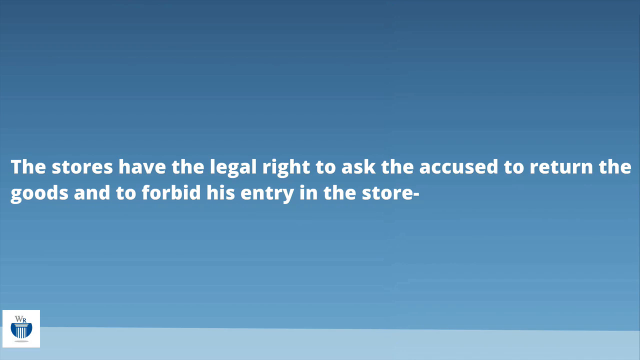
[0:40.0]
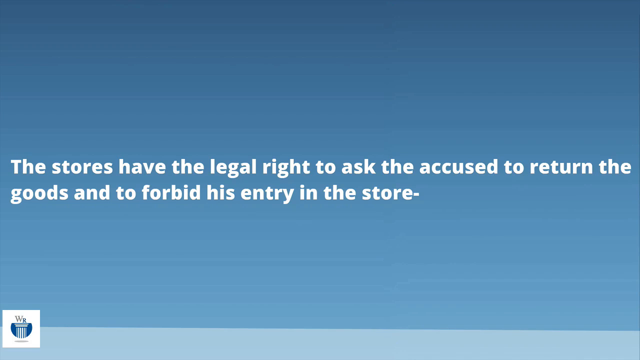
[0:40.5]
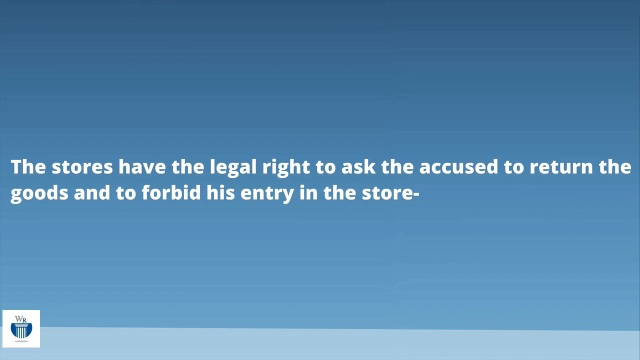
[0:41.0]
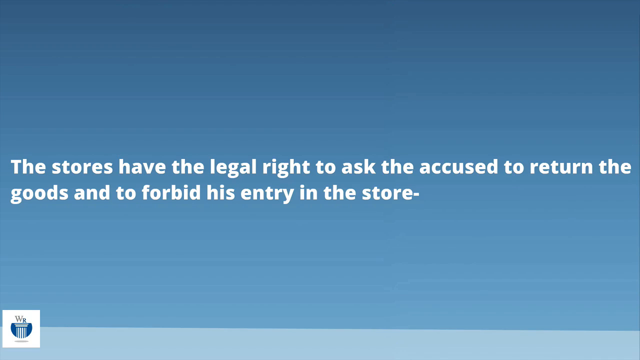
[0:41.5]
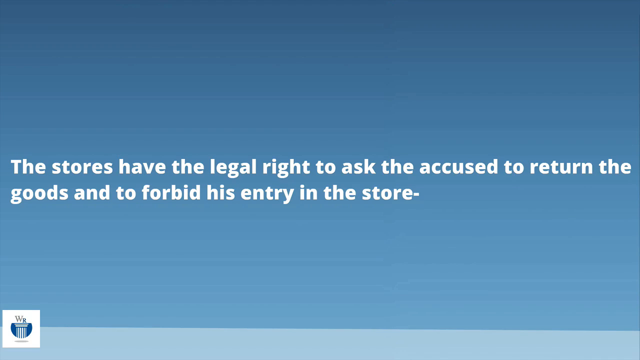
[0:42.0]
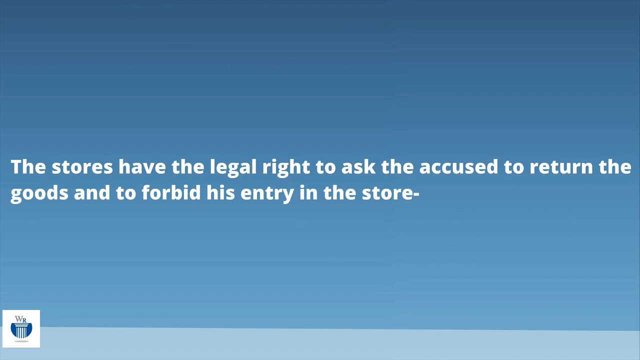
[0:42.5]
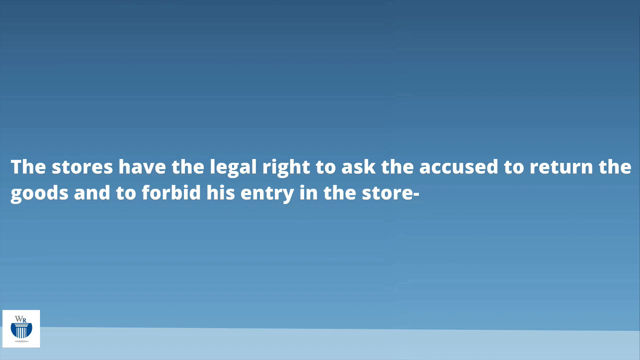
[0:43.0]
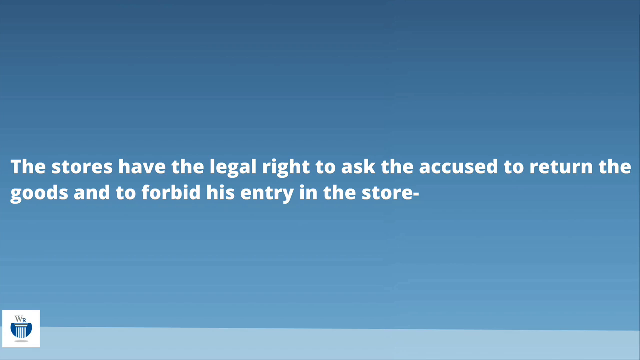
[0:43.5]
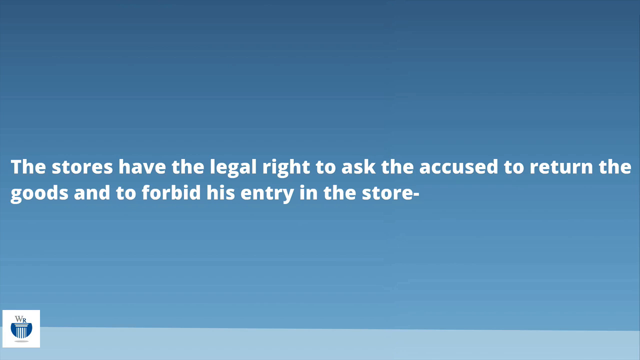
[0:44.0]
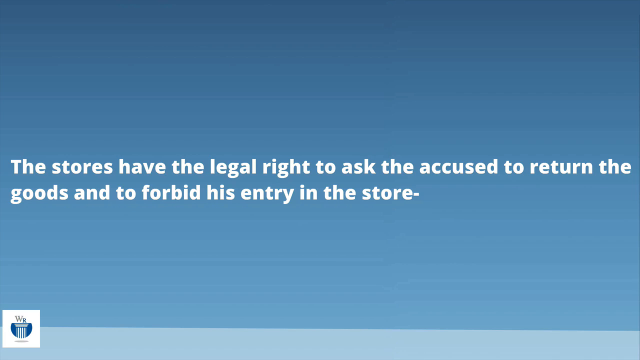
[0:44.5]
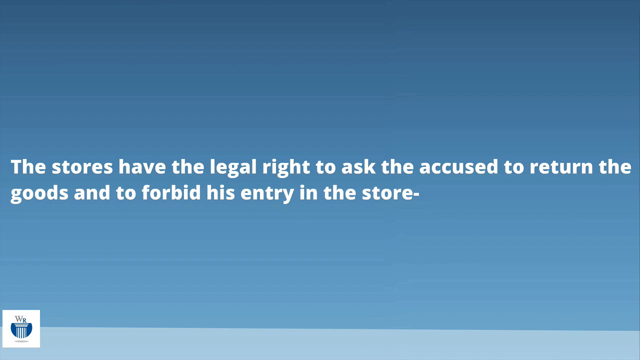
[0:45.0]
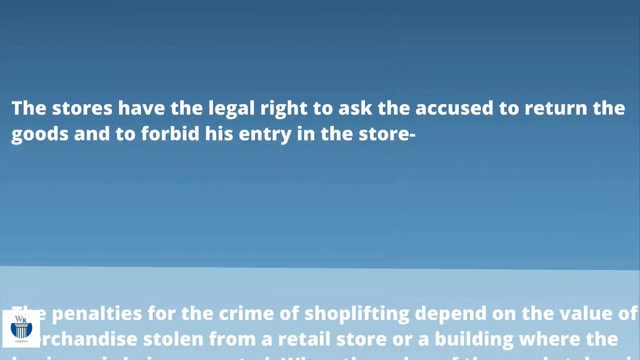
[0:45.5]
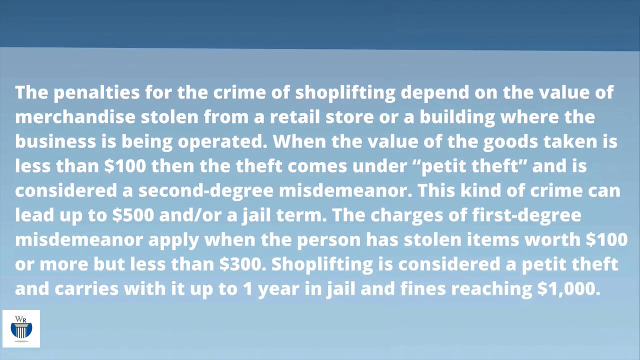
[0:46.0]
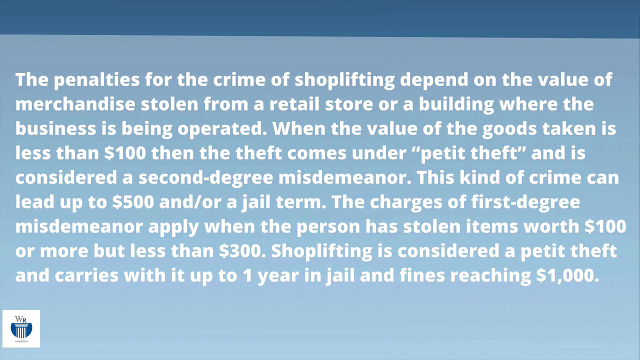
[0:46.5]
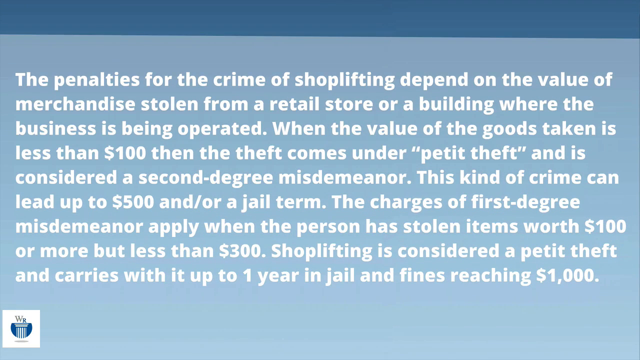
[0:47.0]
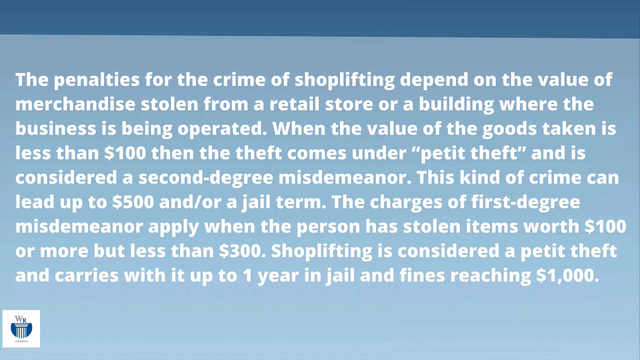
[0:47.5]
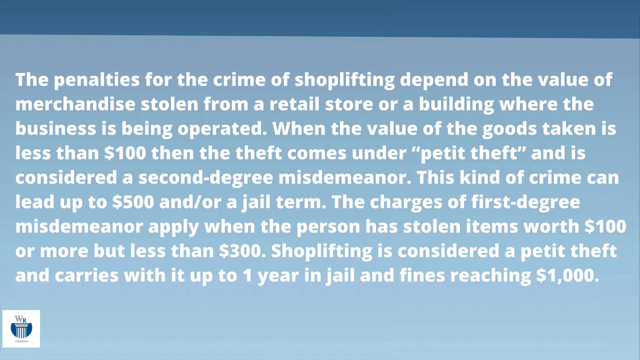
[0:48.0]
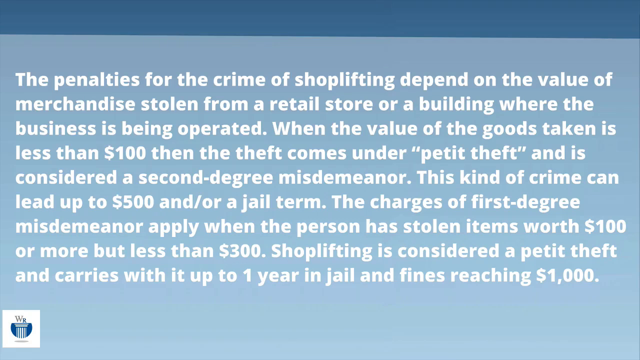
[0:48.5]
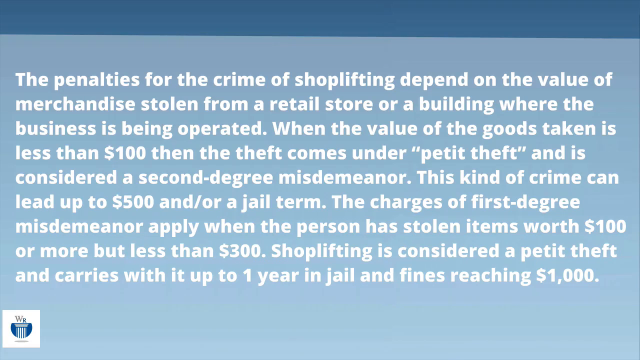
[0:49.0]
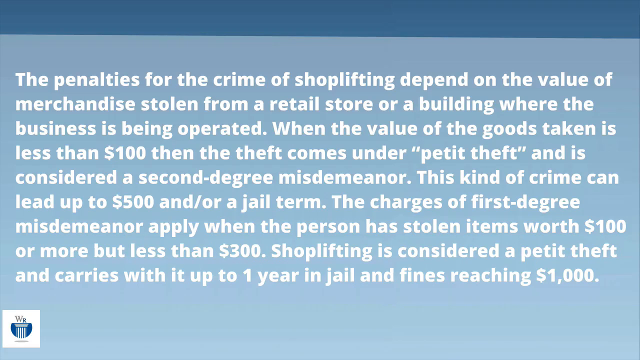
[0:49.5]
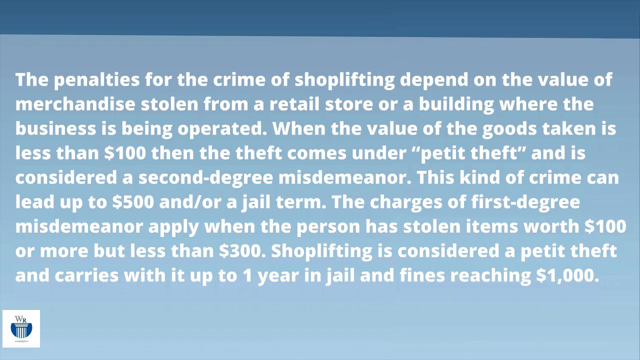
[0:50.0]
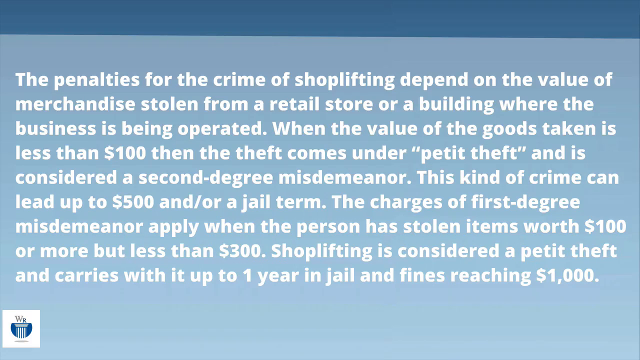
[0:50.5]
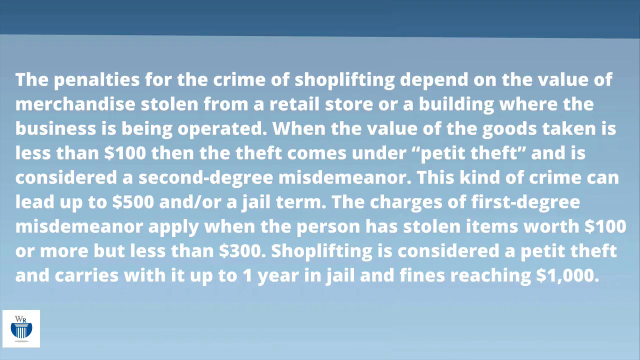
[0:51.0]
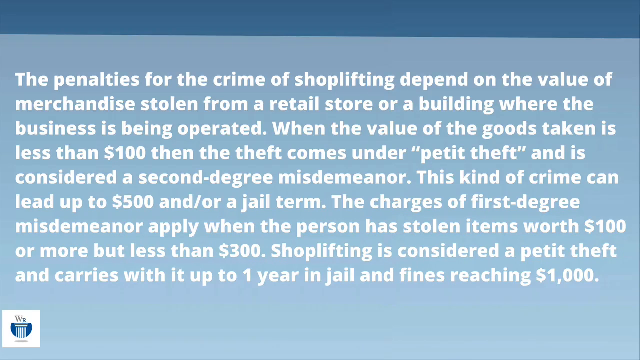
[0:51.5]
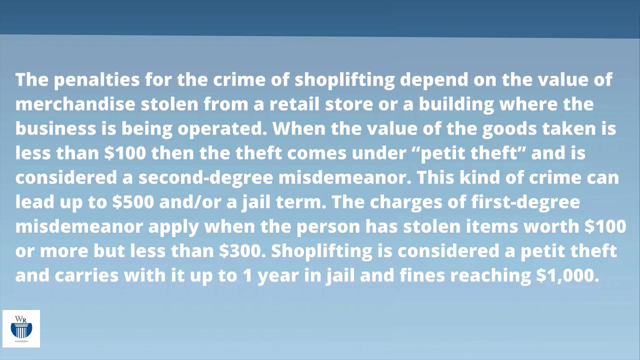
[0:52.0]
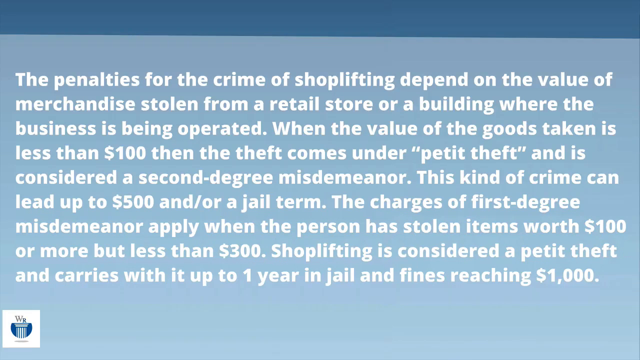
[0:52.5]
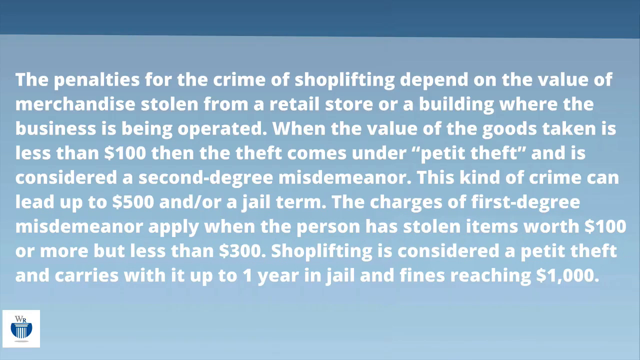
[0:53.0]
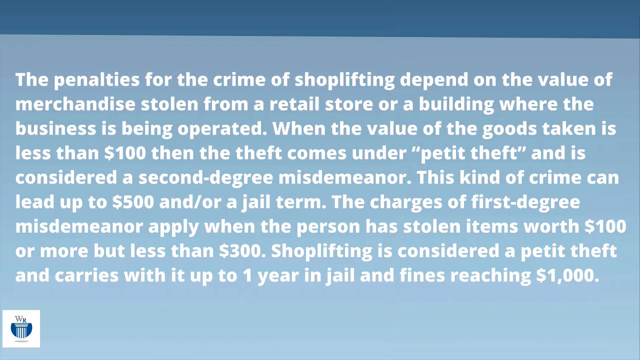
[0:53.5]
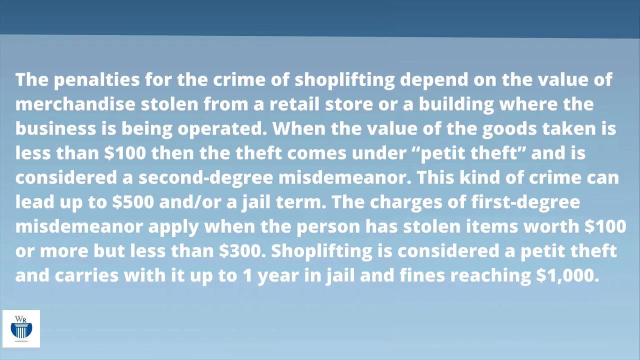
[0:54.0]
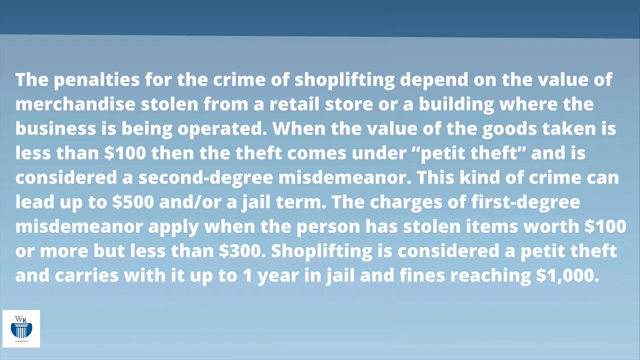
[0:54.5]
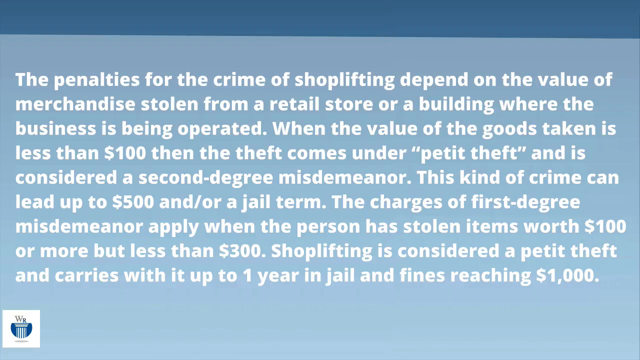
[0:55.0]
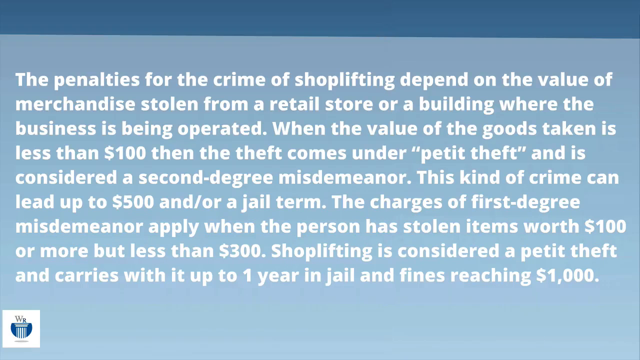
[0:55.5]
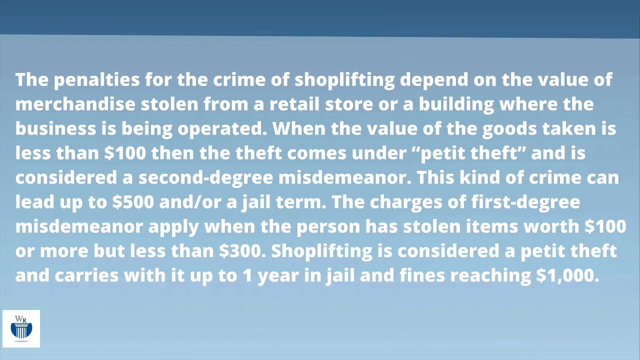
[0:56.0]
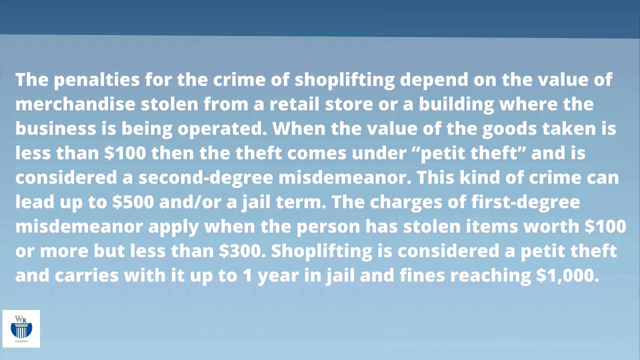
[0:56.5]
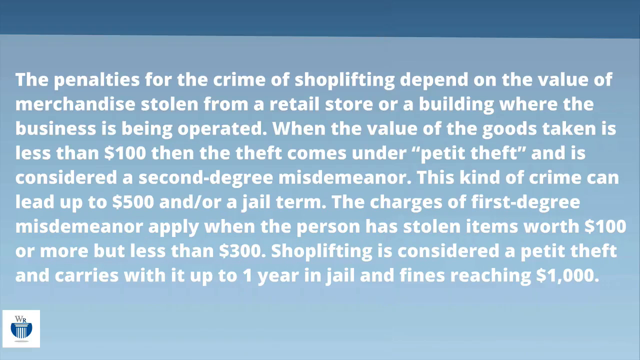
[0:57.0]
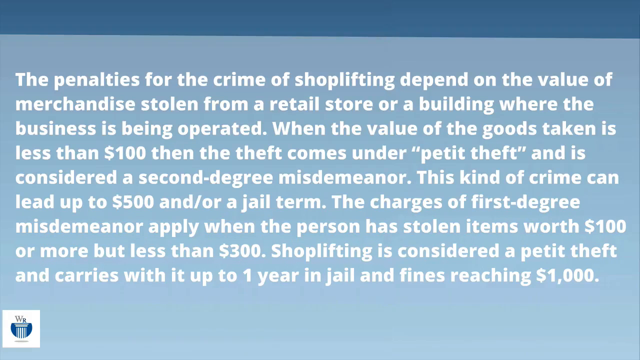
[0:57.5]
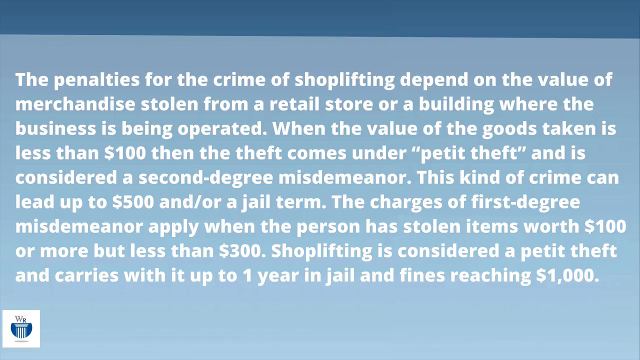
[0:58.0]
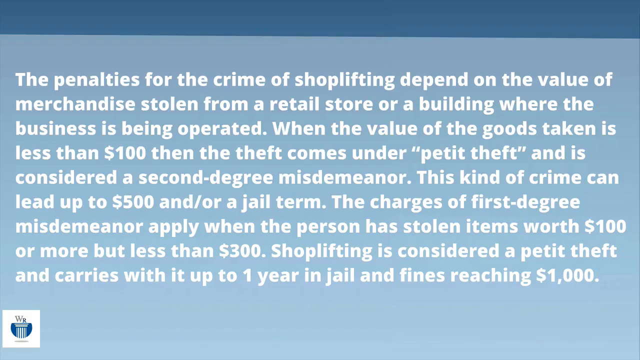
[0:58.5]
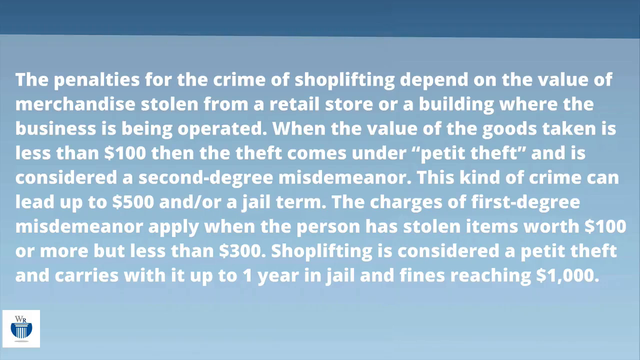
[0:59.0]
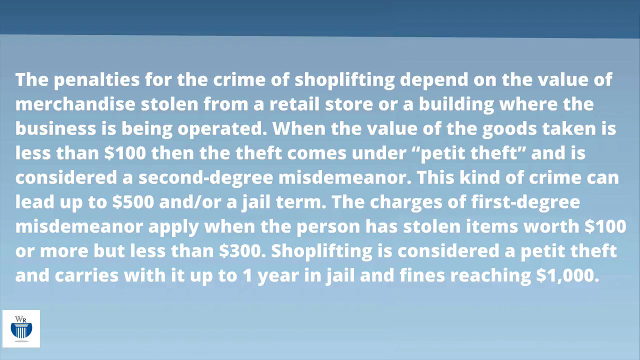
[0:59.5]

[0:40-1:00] Bold white lettering on a blue background reads: "the stores have the legal right to ask the accused to return the goods and to forbid his entry into their store." The next text covers the penalties: "The penalties for the crime of shoplifting depend on the value of merchandise stolen from a retail store or a building where the business is being operated. When the value of the goods taken is less than $100, then the theft comes under petite theft and is considered a second degree misdemeanor. This kind of crime can lead up to $500 and or a jail term. The charges of first degree misdemeanor apply when the person has stolen items worth $100 or more, but less than $300. Shoplifting is considered a petite theft and carries with it up to one year in jail and fines reaching $1,000."